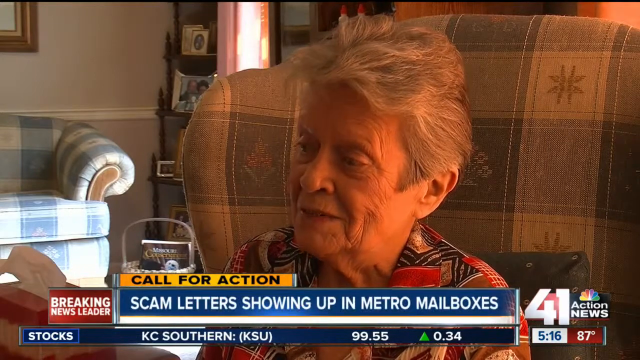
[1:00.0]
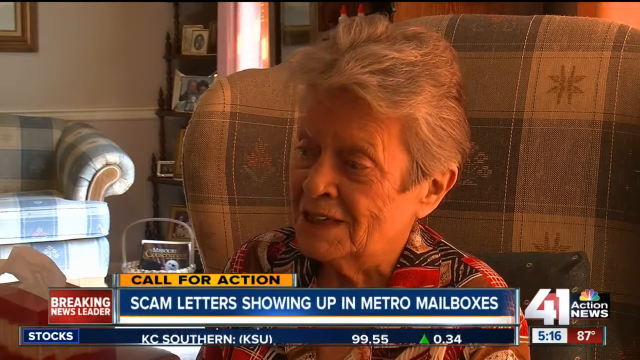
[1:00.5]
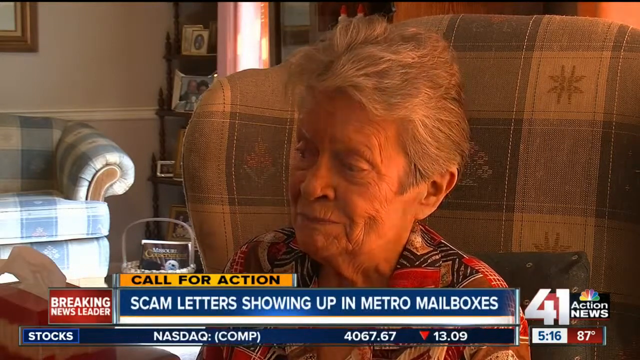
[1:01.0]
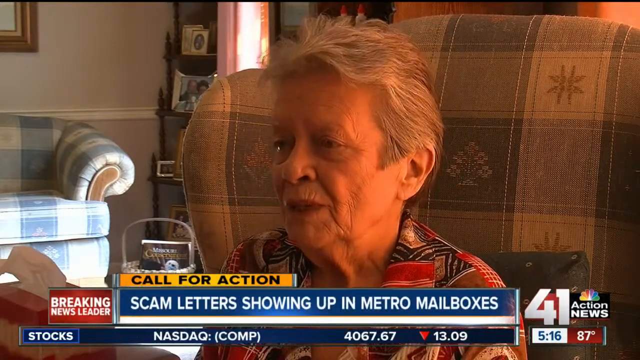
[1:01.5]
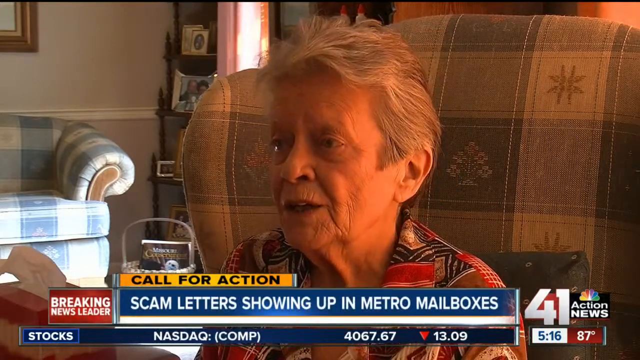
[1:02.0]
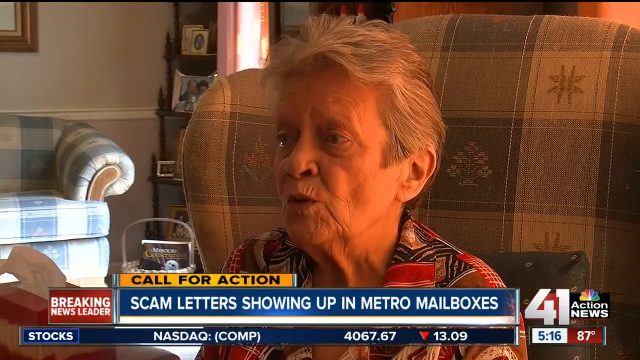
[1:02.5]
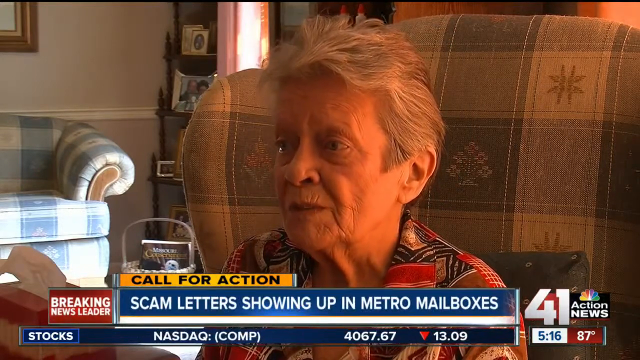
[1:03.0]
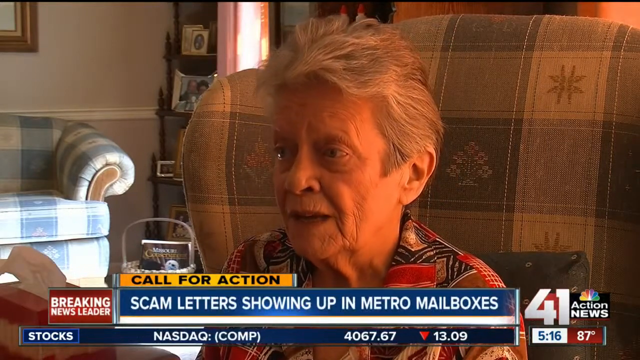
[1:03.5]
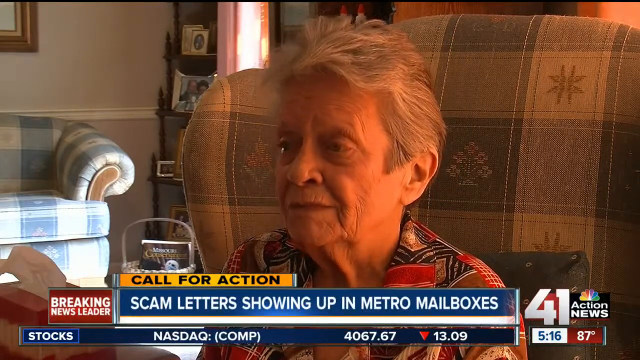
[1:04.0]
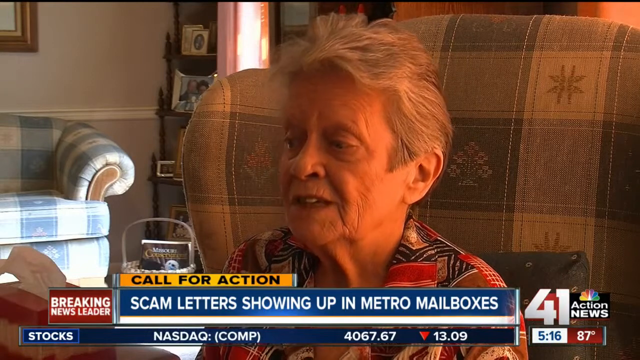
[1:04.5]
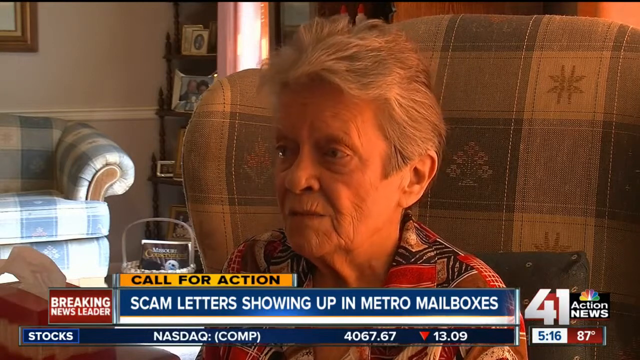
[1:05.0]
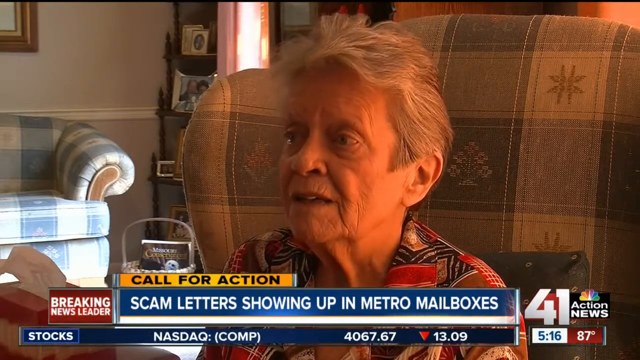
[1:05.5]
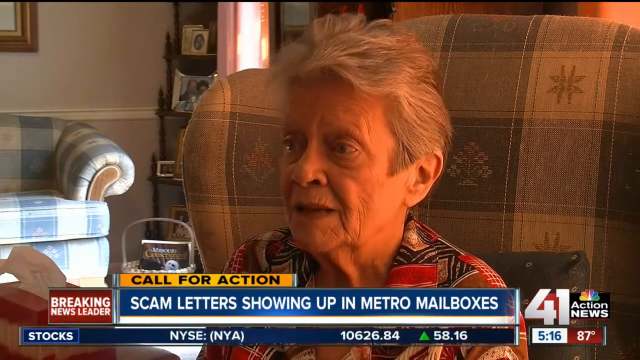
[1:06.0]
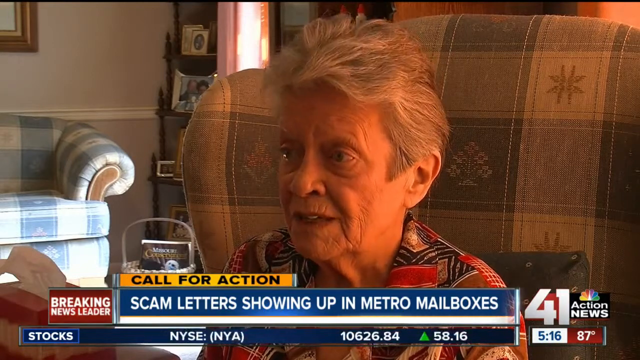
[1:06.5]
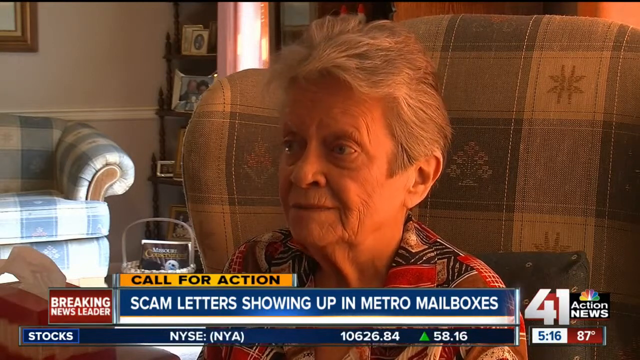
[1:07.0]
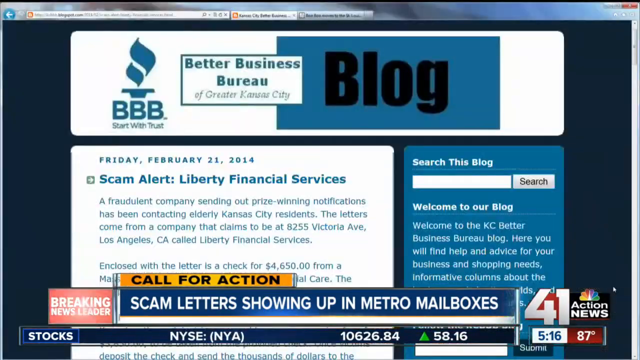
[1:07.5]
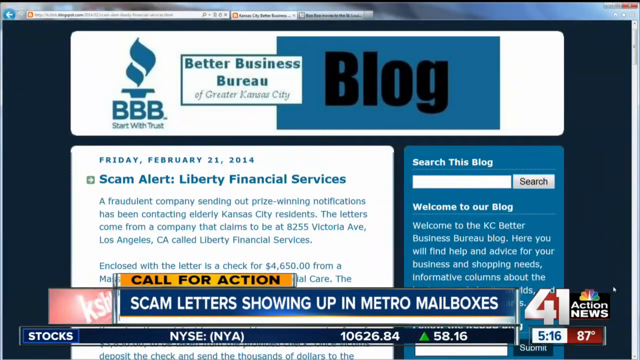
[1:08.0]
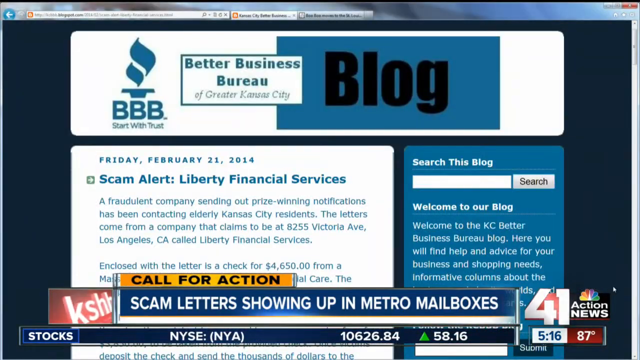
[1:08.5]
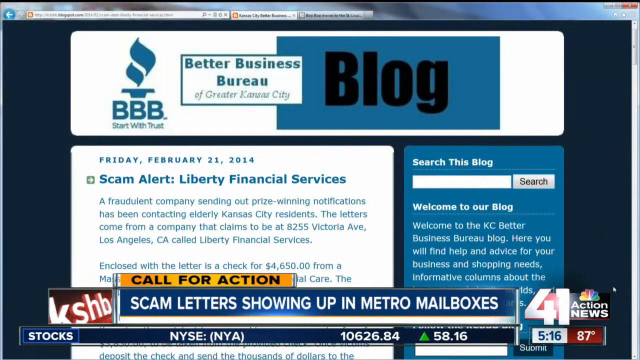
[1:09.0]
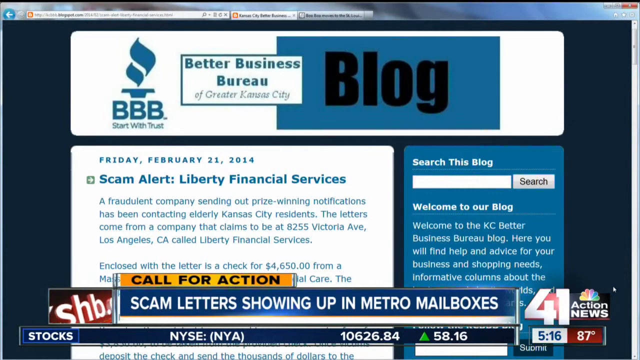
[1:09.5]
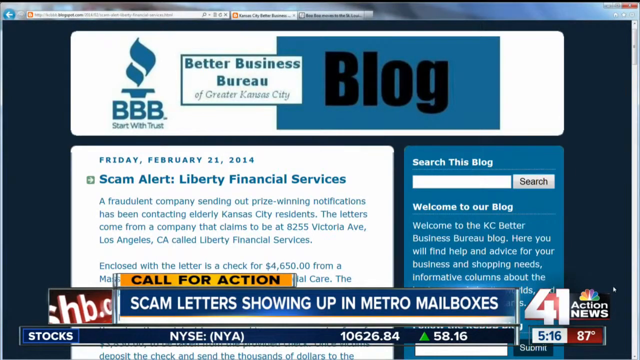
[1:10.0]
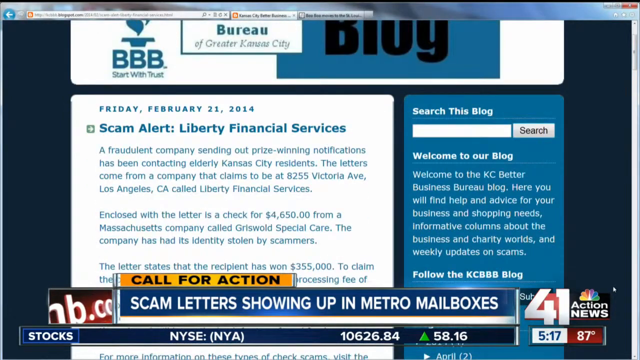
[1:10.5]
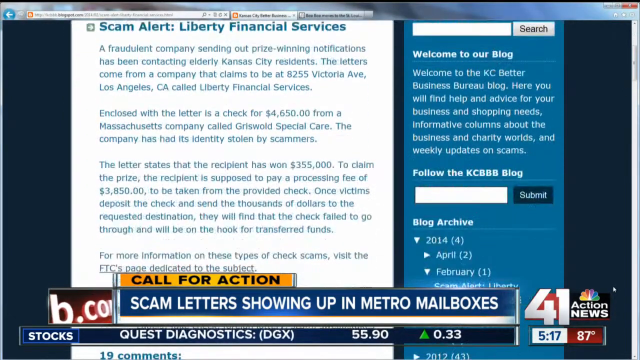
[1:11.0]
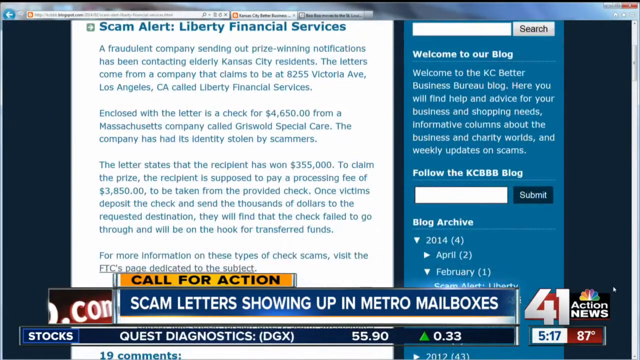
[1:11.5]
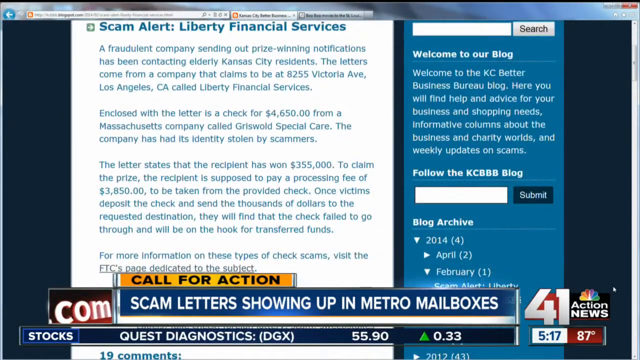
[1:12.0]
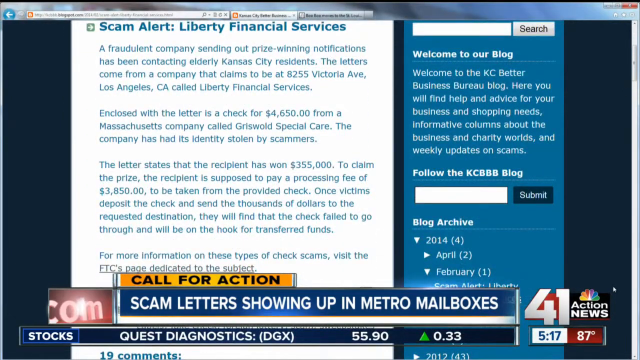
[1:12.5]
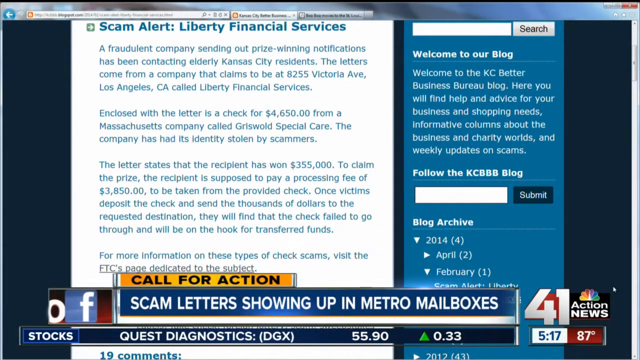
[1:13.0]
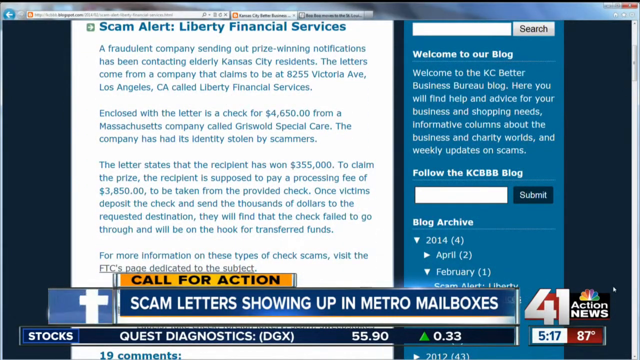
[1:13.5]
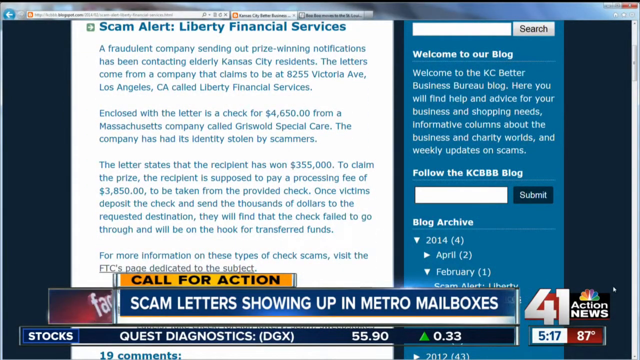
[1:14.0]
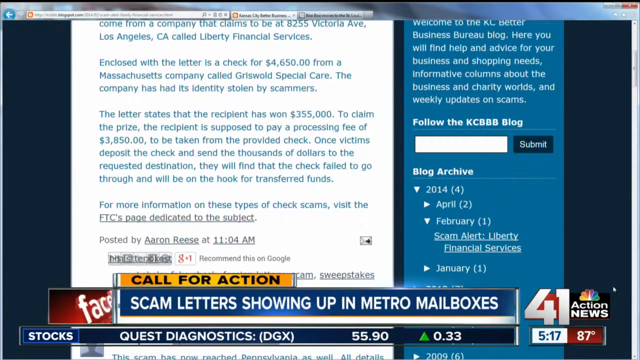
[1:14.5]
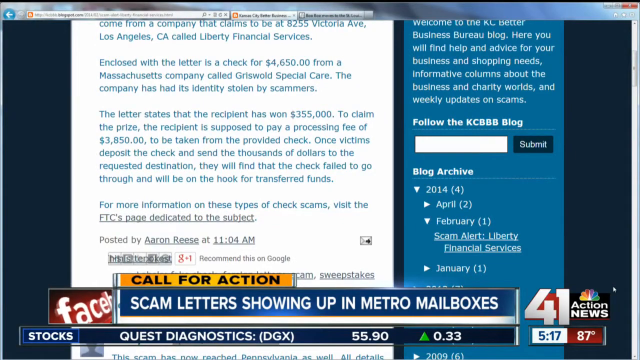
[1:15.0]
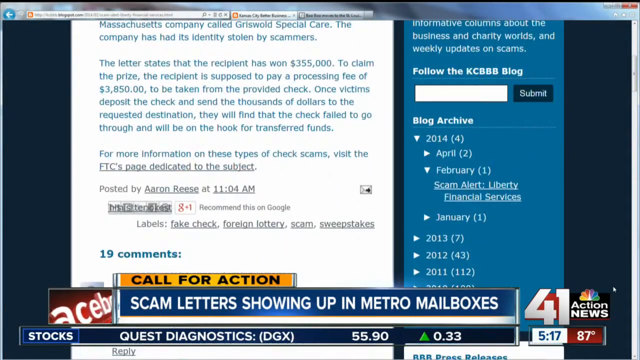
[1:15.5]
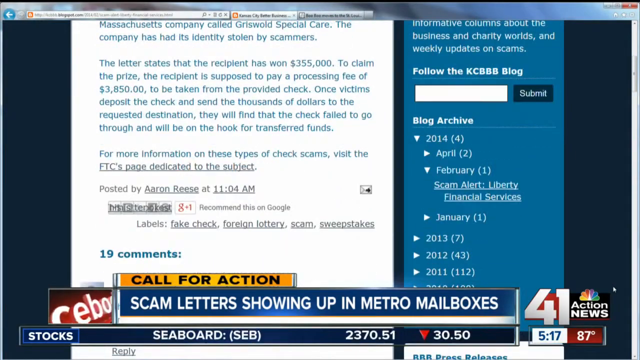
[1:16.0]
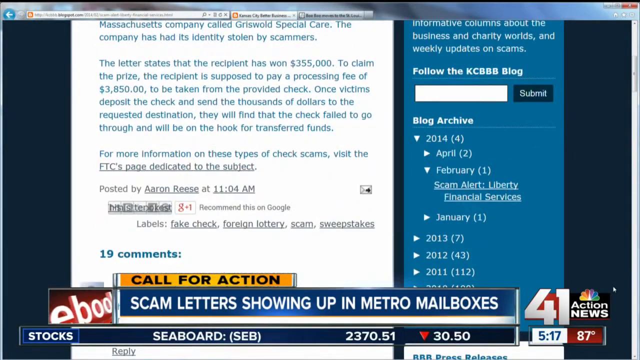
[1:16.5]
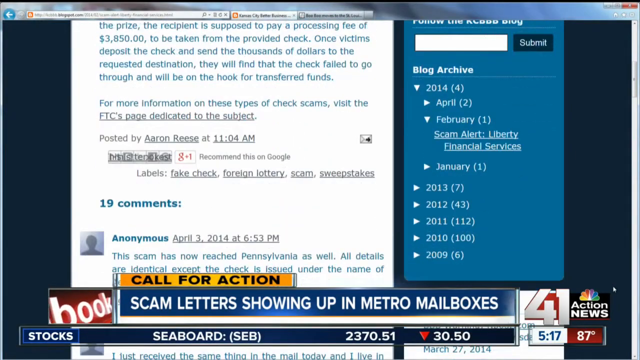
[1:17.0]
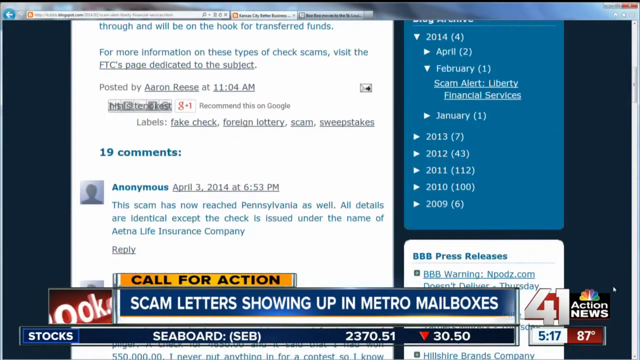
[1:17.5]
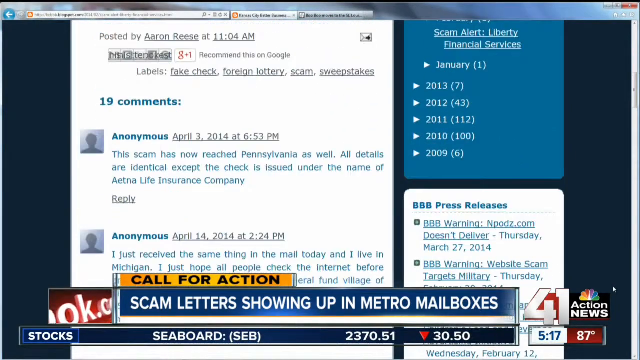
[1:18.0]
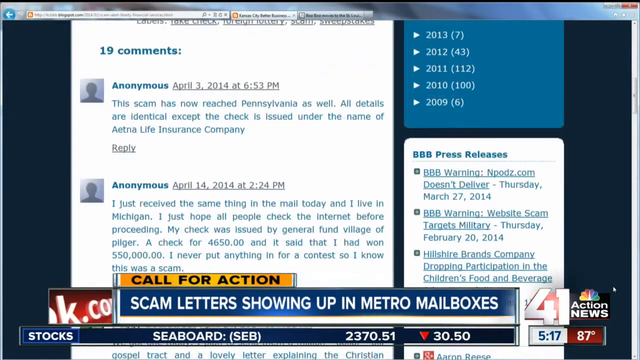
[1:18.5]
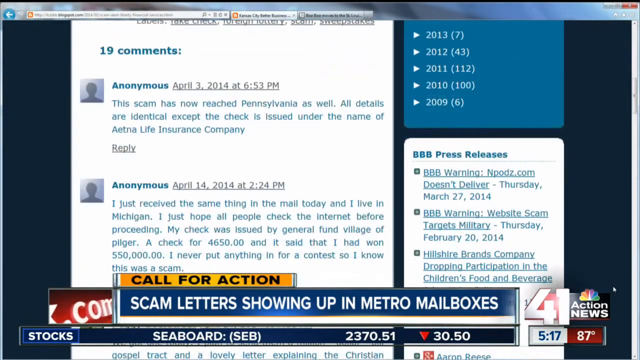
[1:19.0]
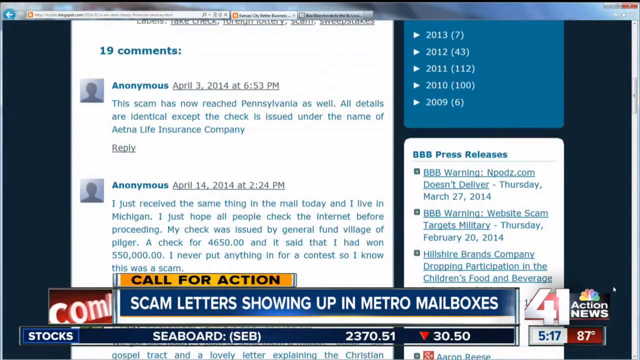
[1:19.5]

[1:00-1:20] An empty couch is shown with sun rays coming in. On the right-hand side of the couch is what looks like a photo album wall, with what looks like a small table below it. The video then shows a screenshot of an internet tab: a blog by Better Business Payroll, BPP. The article is scrolled down, showing what looks like a scam, and further scrolling reveals comments. The top right corner of the screenshot shows it is an old version of Windows.